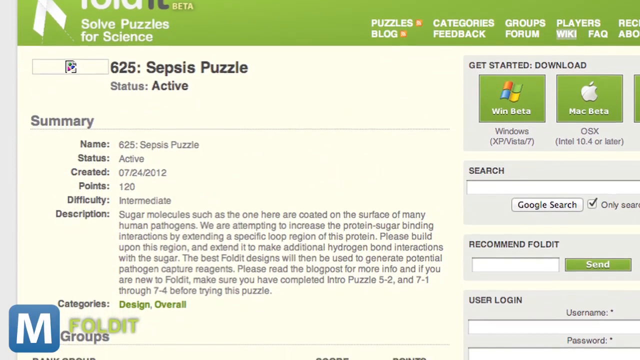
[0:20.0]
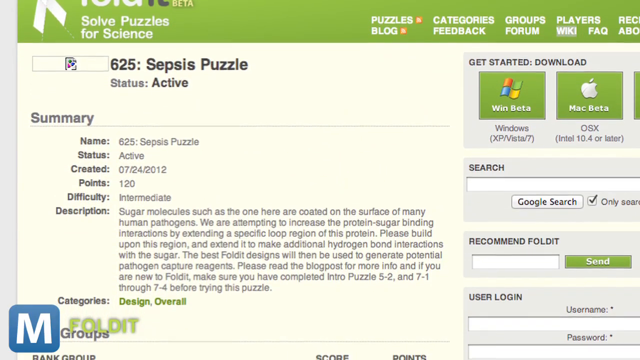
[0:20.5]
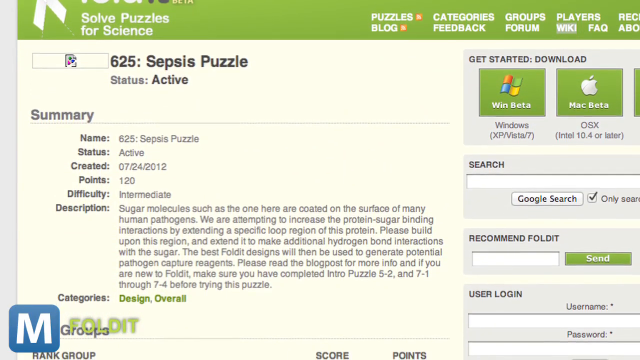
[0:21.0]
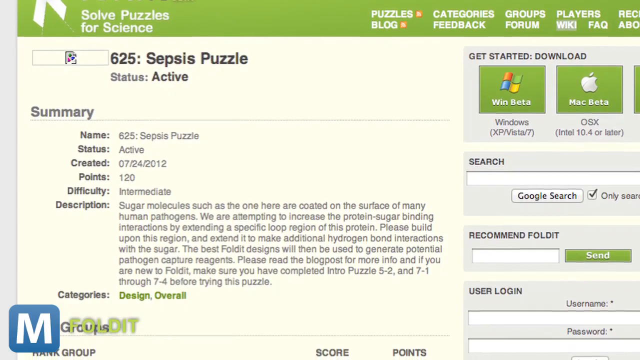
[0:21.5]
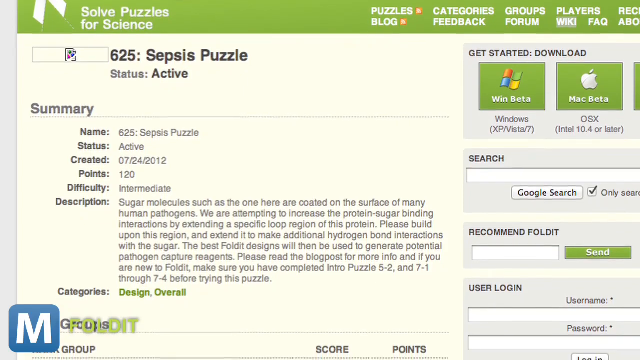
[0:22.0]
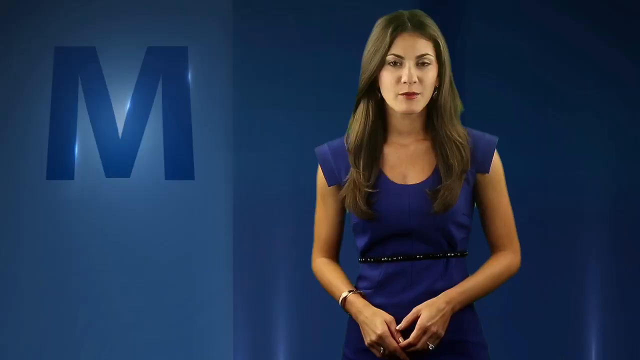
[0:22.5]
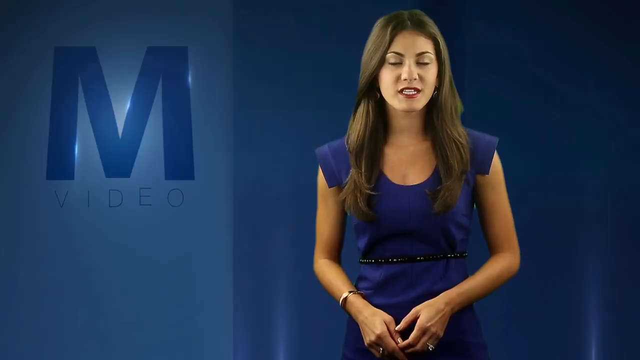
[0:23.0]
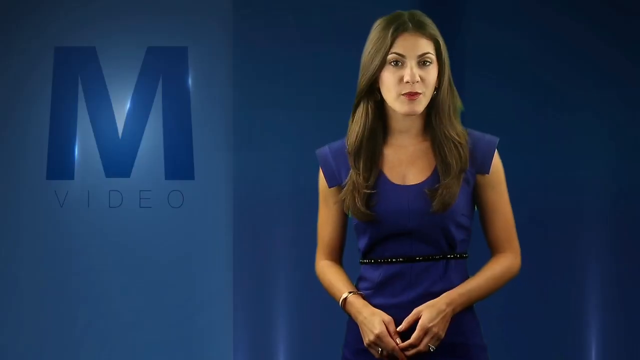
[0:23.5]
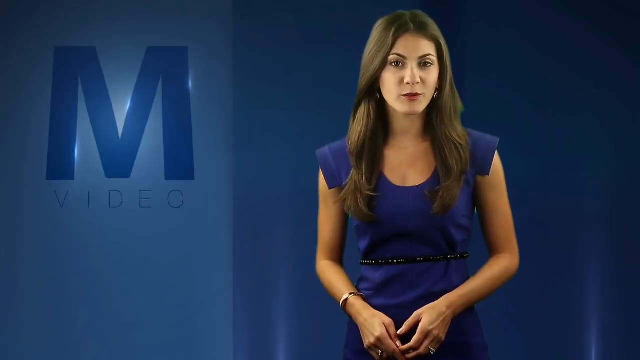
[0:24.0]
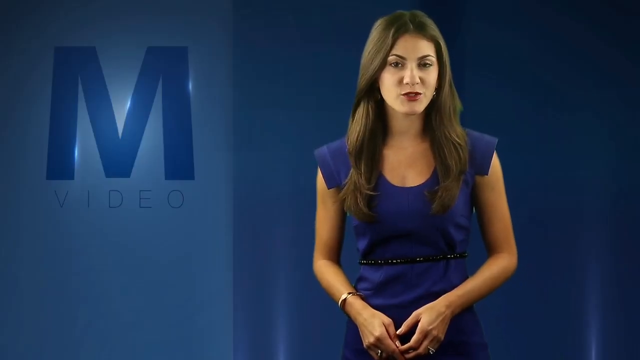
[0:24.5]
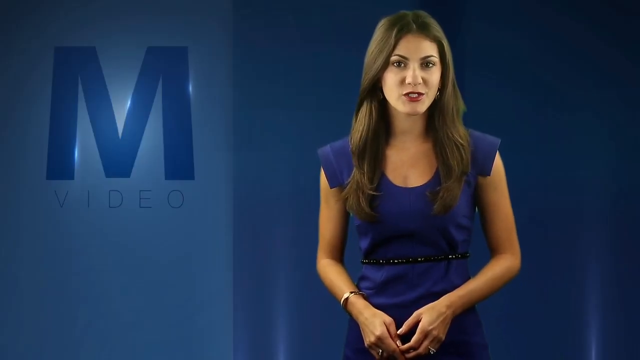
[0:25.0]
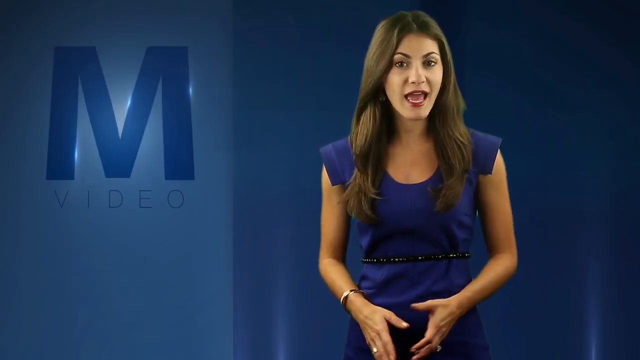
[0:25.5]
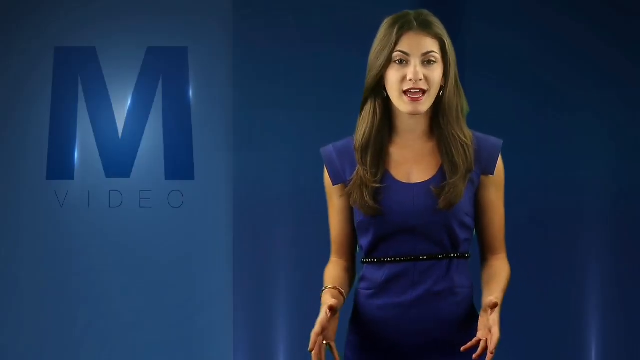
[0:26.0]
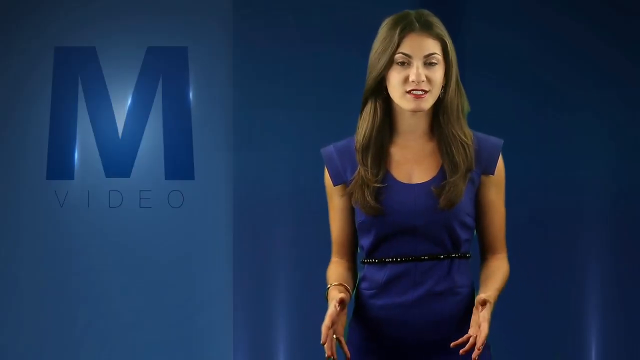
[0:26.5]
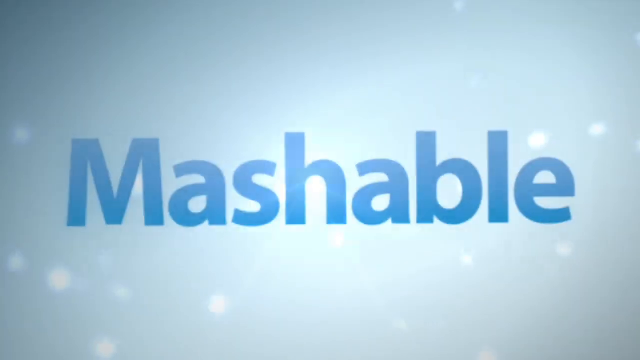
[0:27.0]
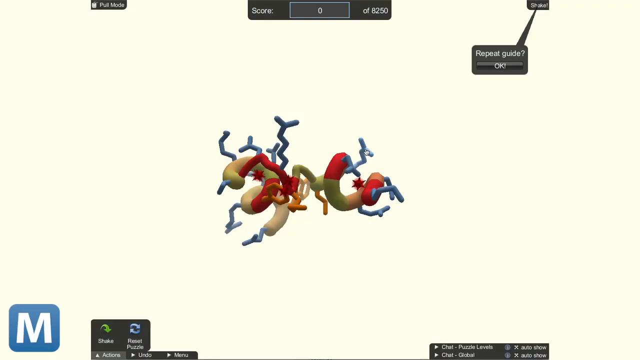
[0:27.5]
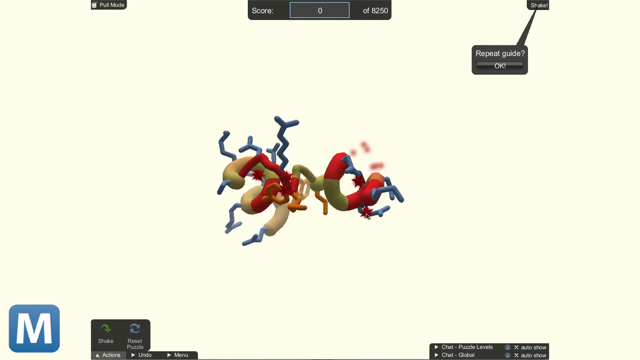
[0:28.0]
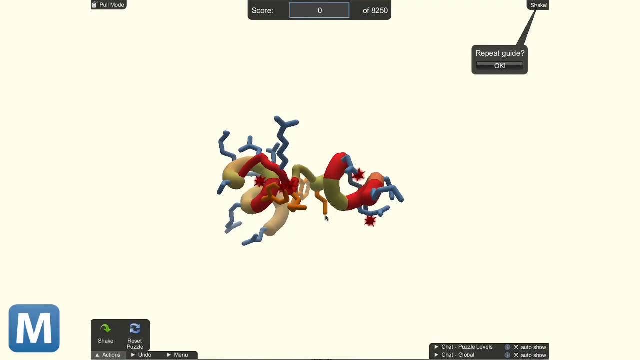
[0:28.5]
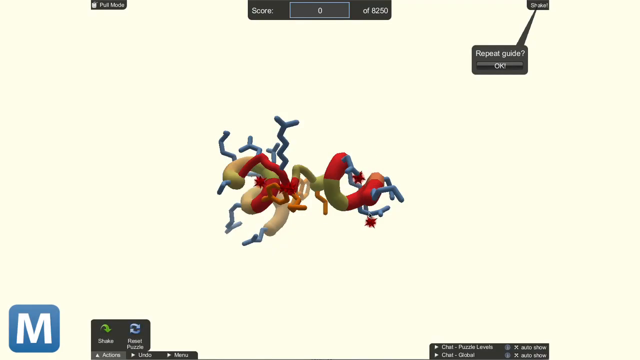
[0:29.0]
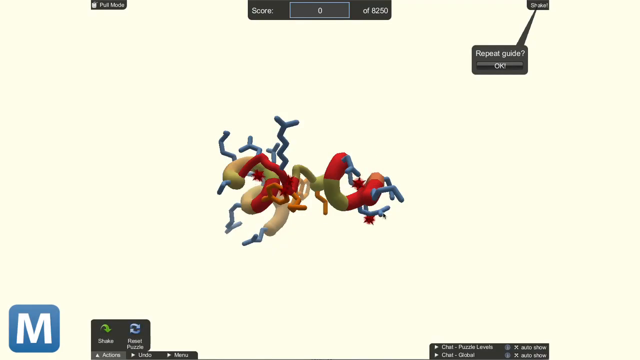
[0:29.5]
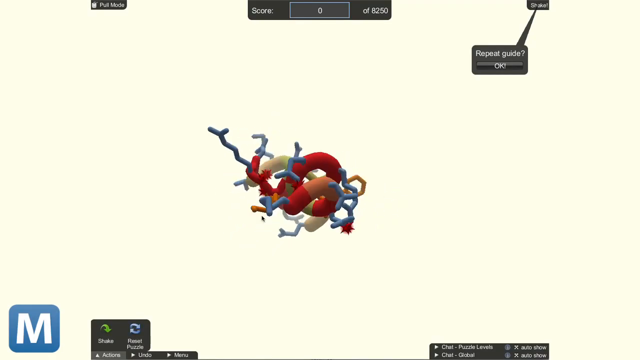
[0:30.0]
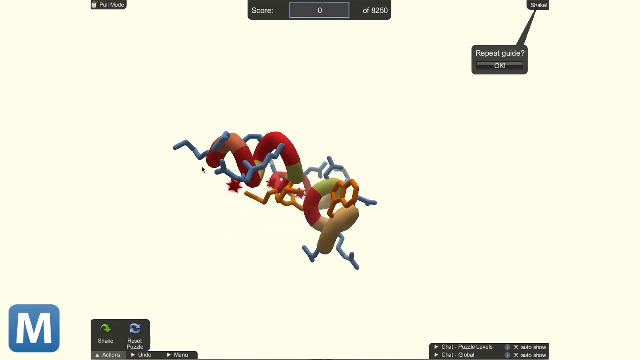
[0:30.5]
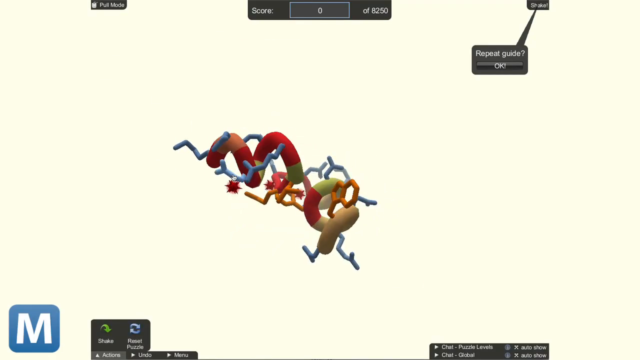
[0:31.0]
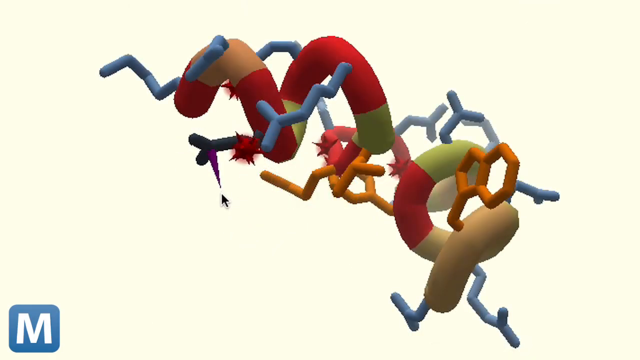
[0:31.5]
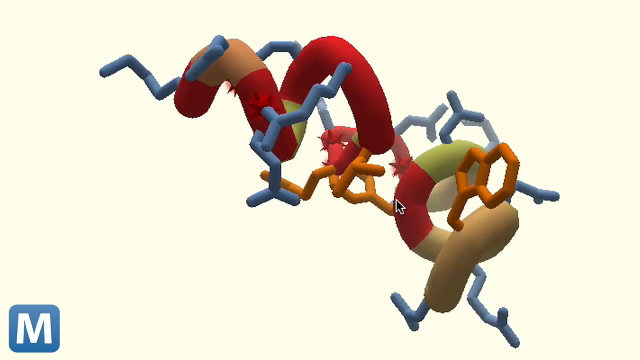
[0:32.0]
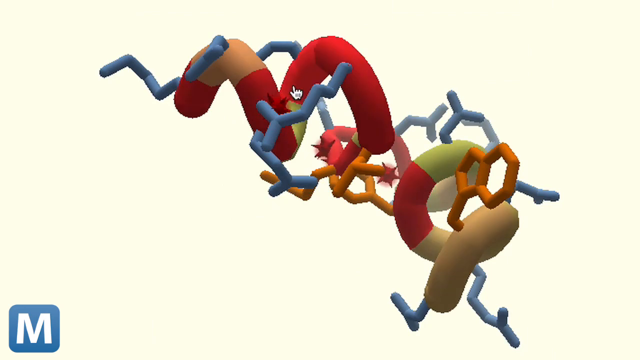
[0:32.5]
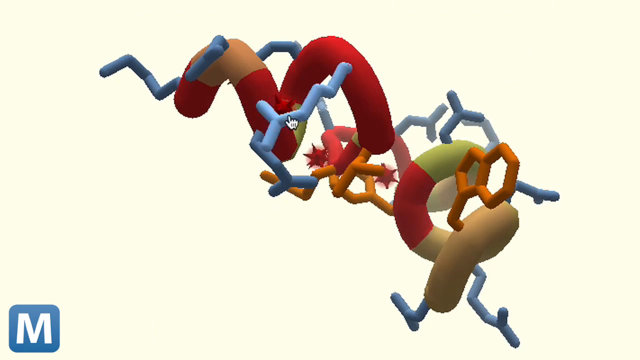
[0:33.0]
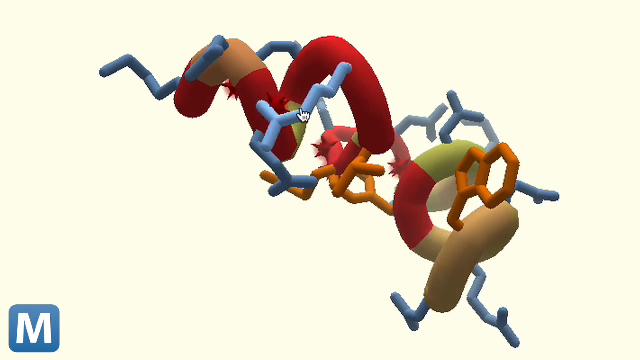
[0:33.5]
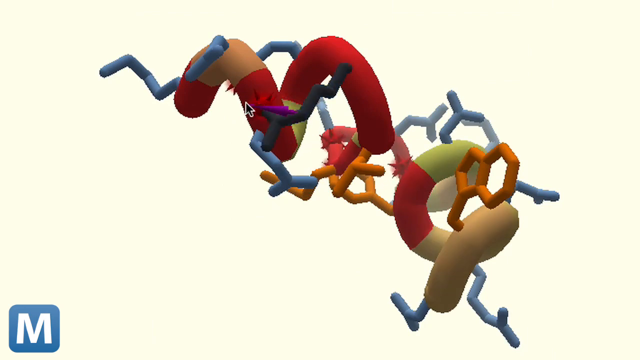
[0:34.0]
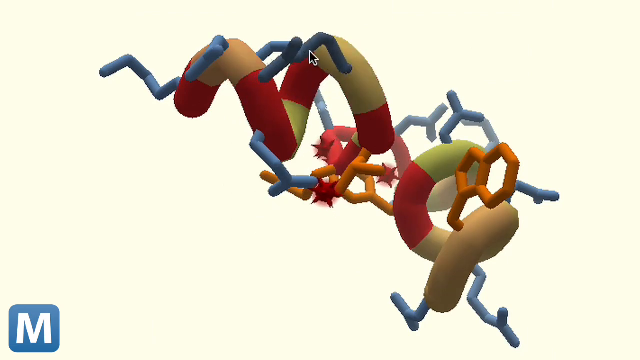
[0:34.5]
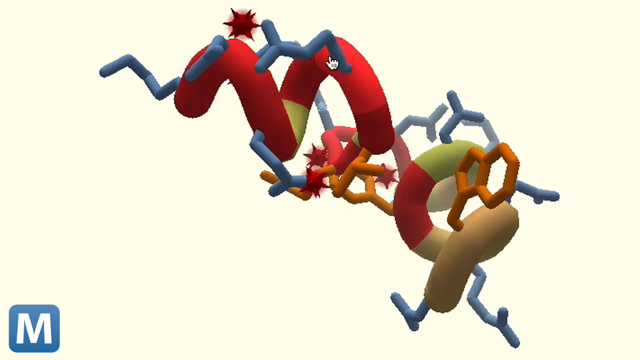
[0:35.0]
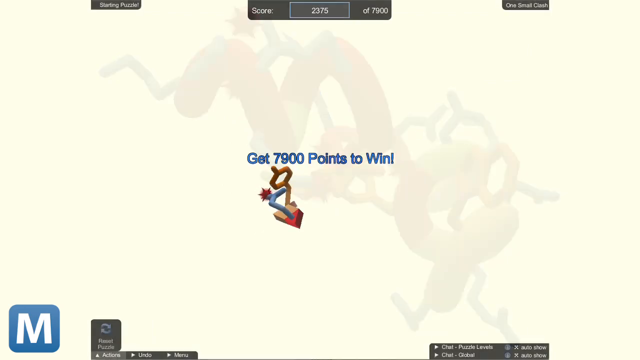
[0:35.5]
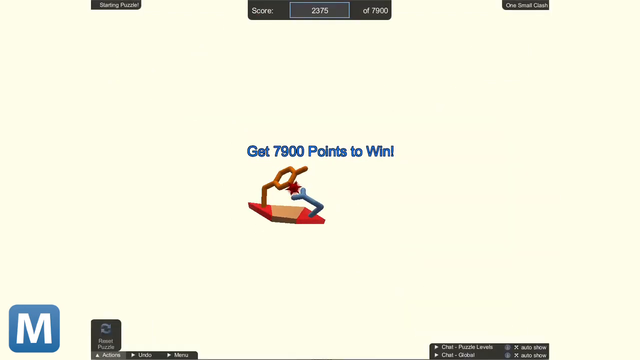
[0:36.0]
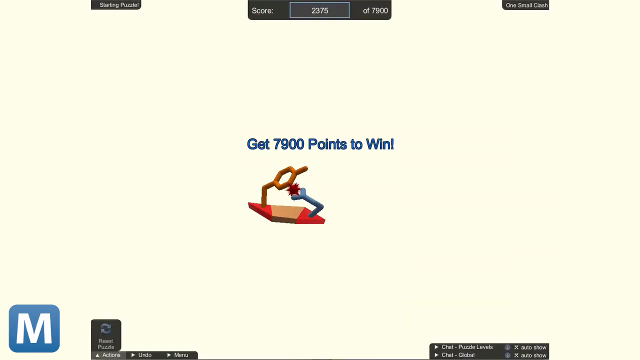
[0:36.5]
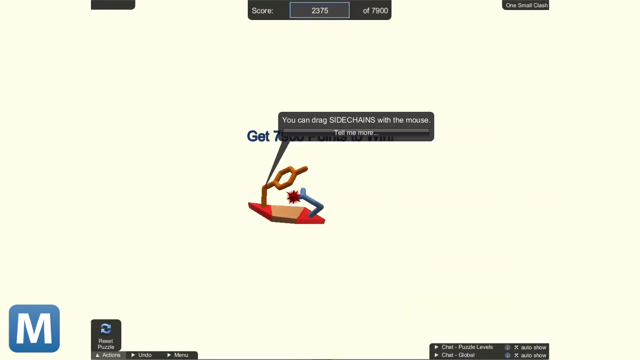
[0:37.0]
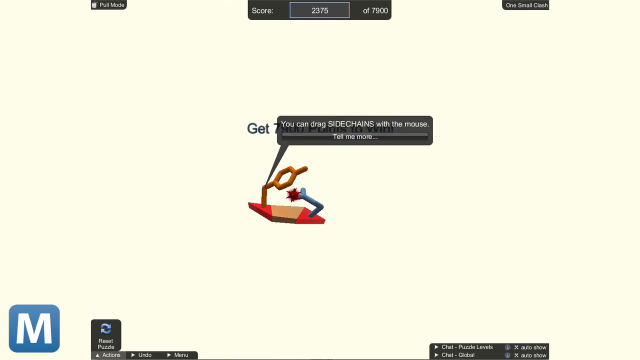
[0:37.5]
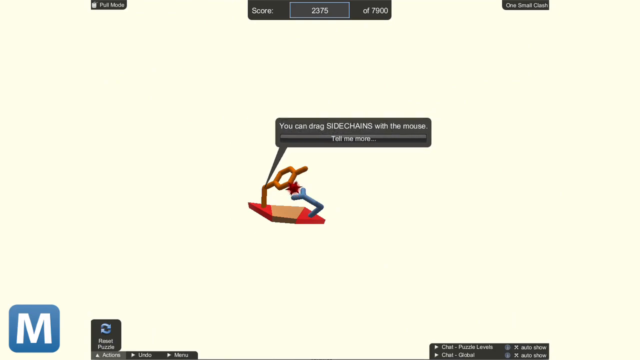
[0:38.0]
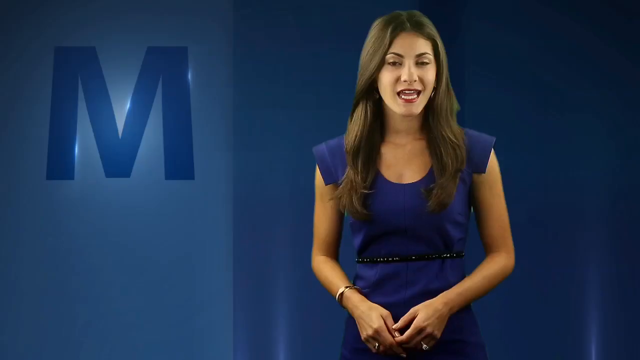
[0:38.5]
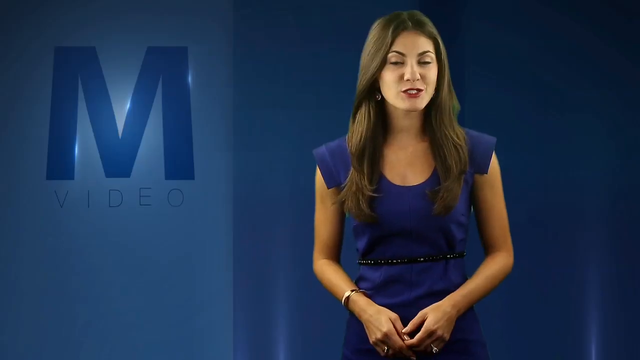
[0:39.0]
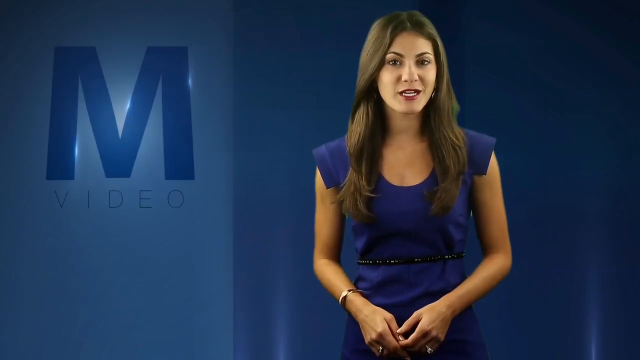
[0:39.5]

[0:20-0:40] A page of text appears, with the word "Foldit" in white and black text at the top alongside the smaller word "beta". Below it, white text reads "solve puzzles for science". To the right are buttons including Puzzles & Blog, Categories & Feedback, Groups & Forum, and Players with Wiki and FAQ. Beneath that, black text on a white background reads "625: Sepsis Puzzle", and below it the status reads "ACTIVE". Next comes the word "SUMMARY", beneath which are the name, 625 Sepsis Puzzle, the status ACTIVE, and the created date, 7-24-2012. A description of the puzzle reads: "Sugar molecules such as the one here are coated on the surface of many human pathogens. We are attempting to increase the protein sugar binding interactions by extending a specific loop region of this protein." In the upper right corner of the Sepsis Puzzle page are option buttons such as "Win Beta" for Windows and "Mac Beta" for OS X, with an open Google search bar below. The video then cuts back to the woman hosting the program.